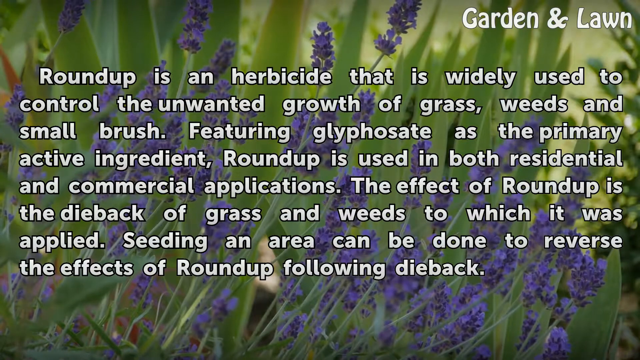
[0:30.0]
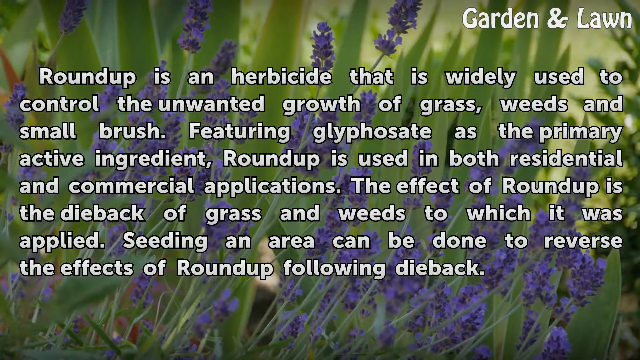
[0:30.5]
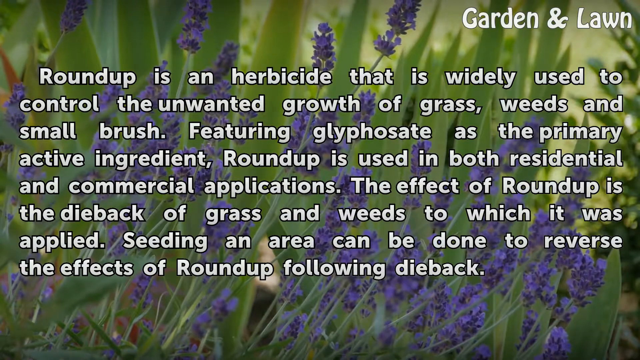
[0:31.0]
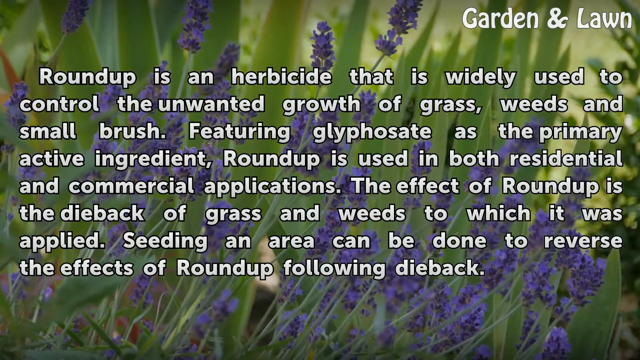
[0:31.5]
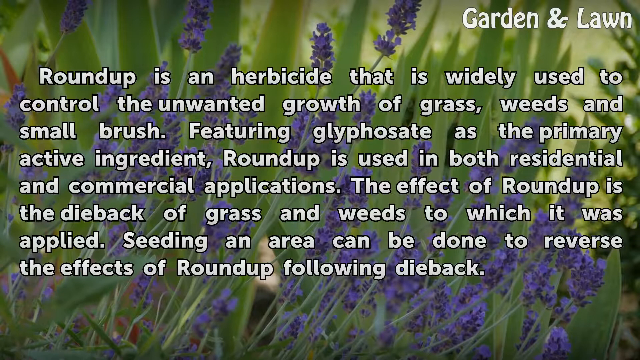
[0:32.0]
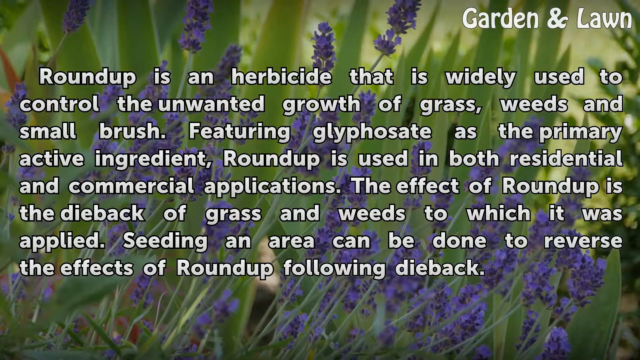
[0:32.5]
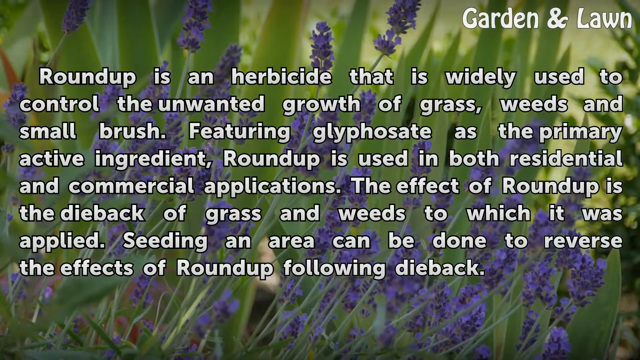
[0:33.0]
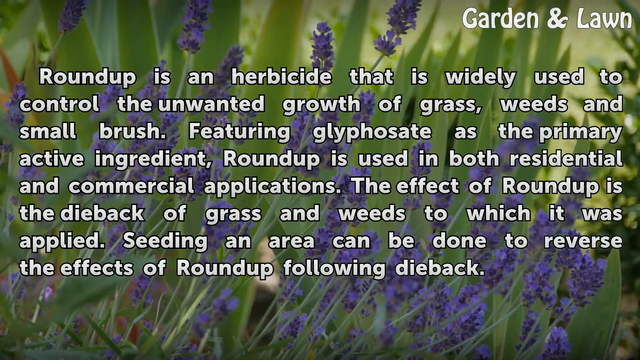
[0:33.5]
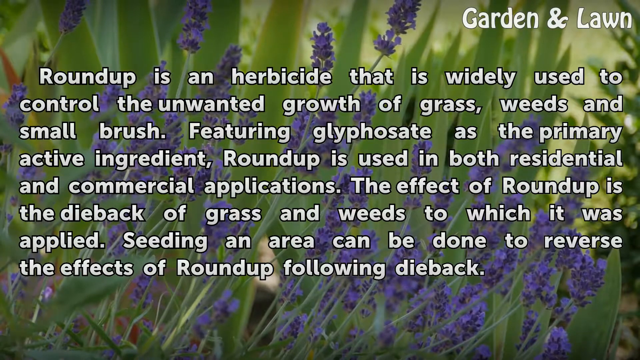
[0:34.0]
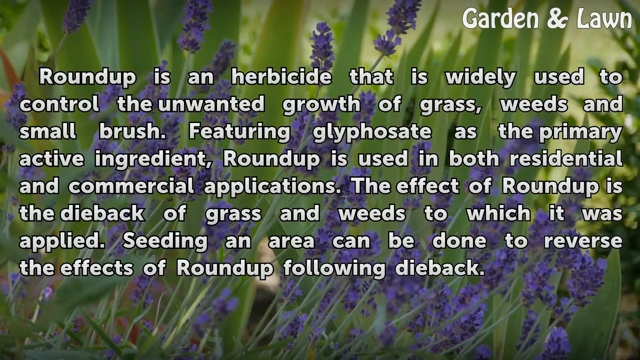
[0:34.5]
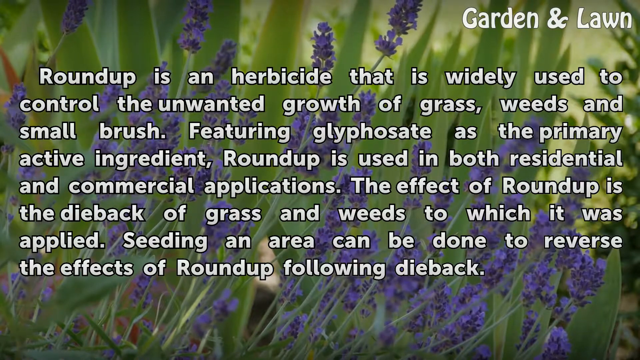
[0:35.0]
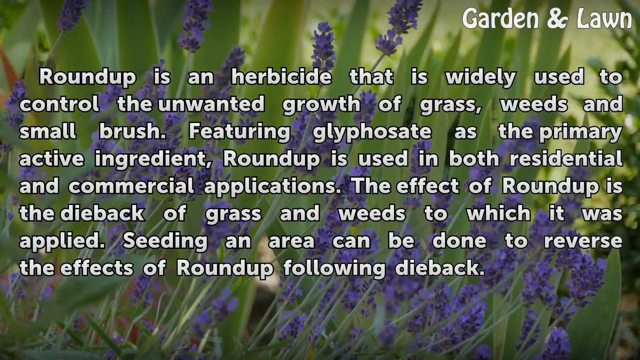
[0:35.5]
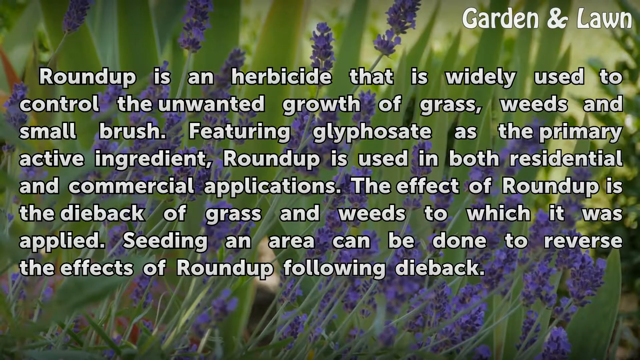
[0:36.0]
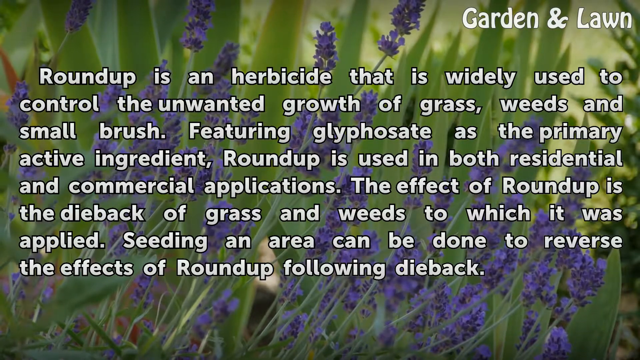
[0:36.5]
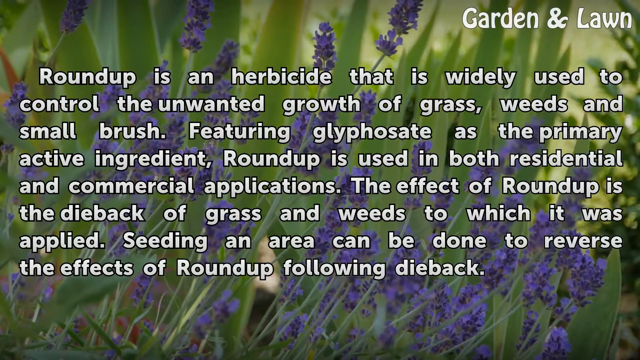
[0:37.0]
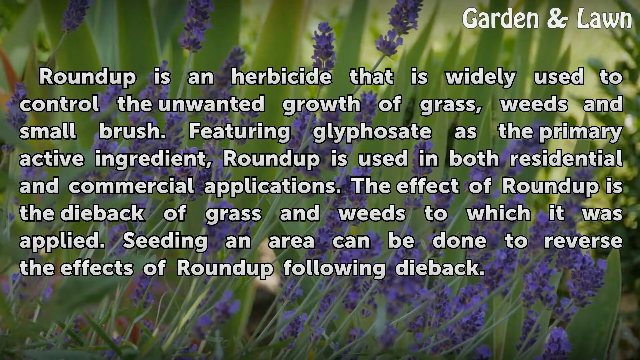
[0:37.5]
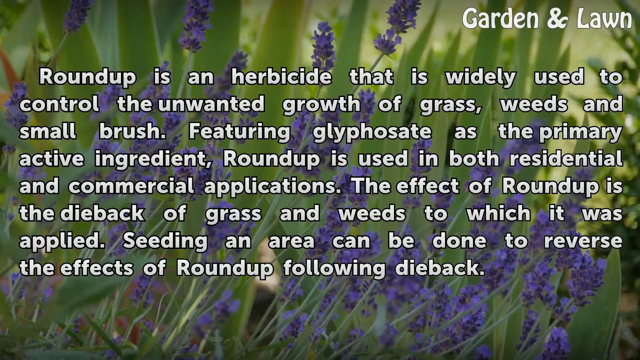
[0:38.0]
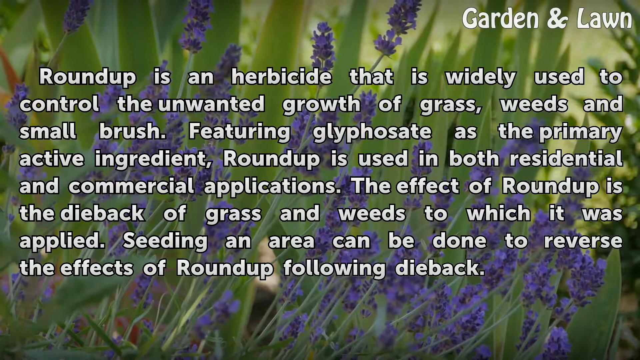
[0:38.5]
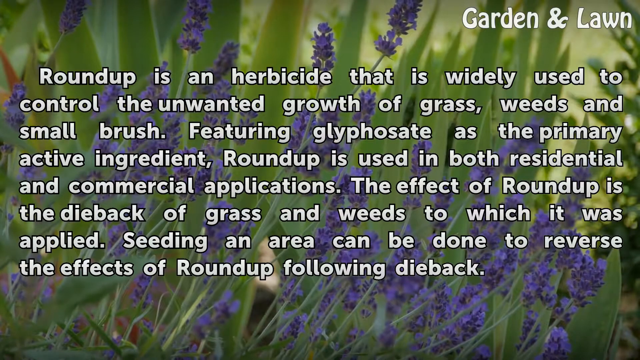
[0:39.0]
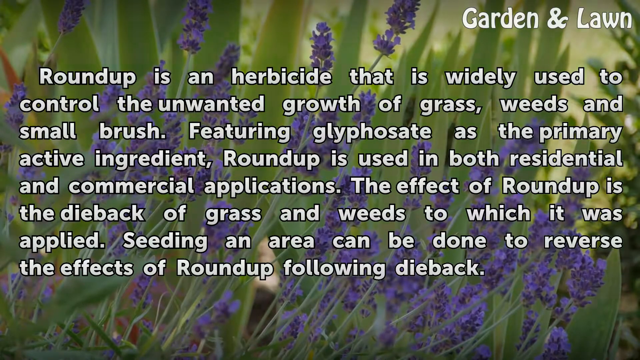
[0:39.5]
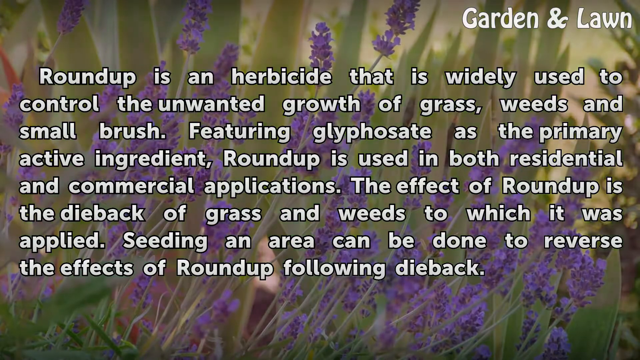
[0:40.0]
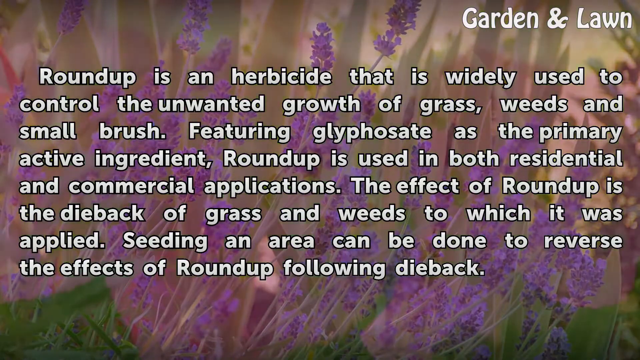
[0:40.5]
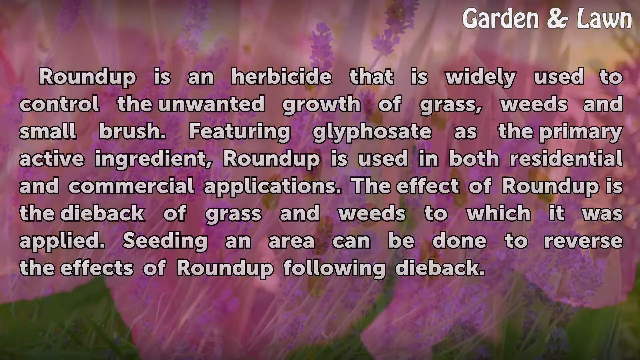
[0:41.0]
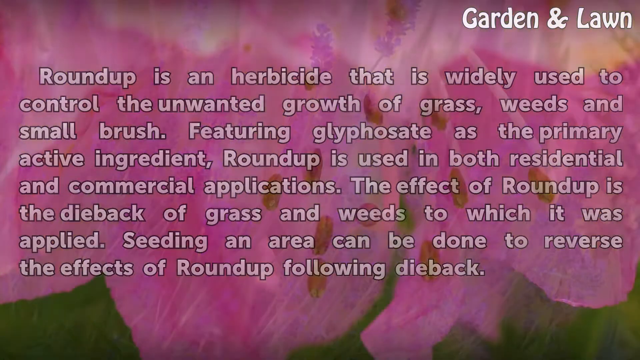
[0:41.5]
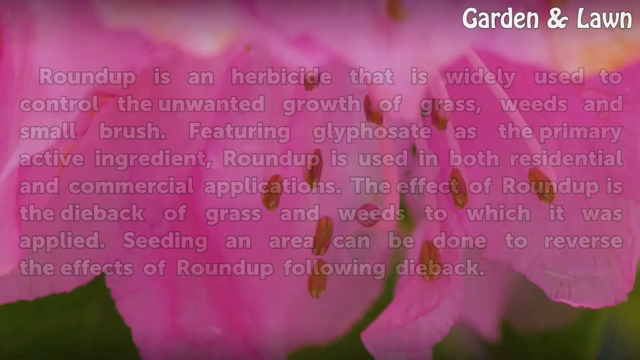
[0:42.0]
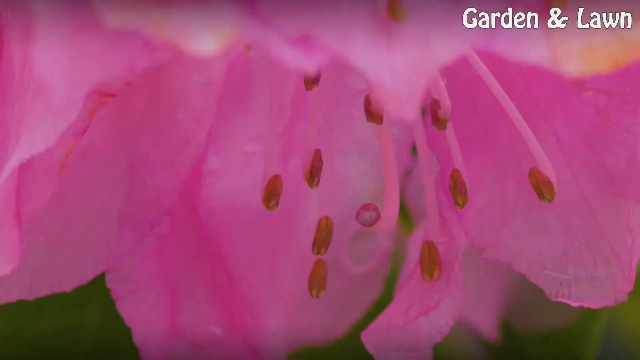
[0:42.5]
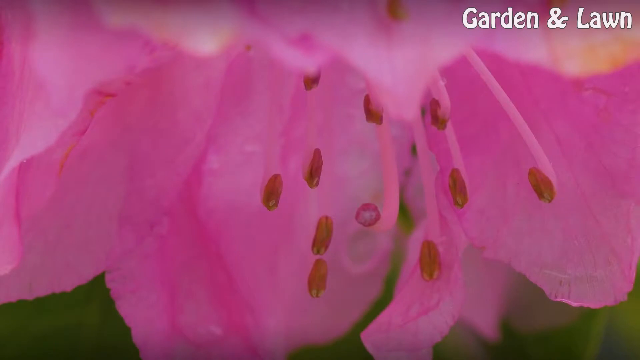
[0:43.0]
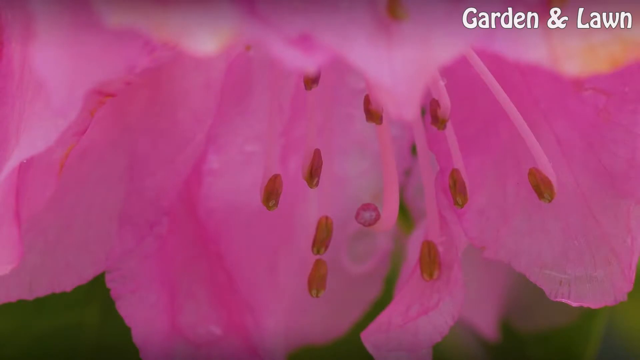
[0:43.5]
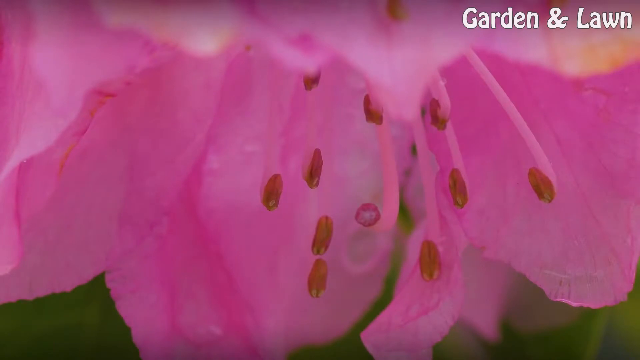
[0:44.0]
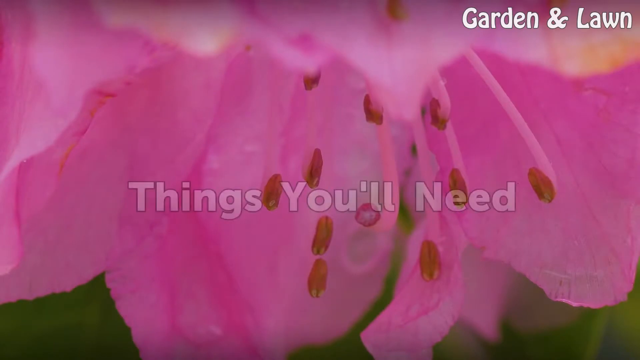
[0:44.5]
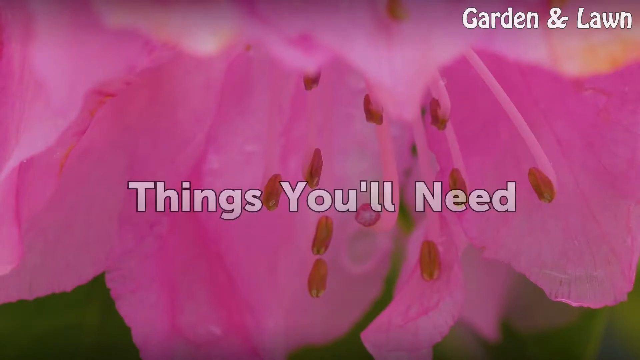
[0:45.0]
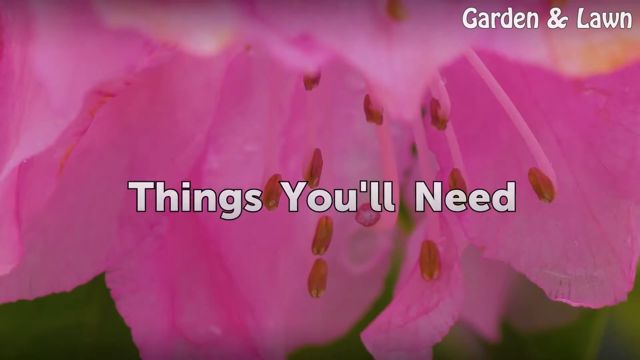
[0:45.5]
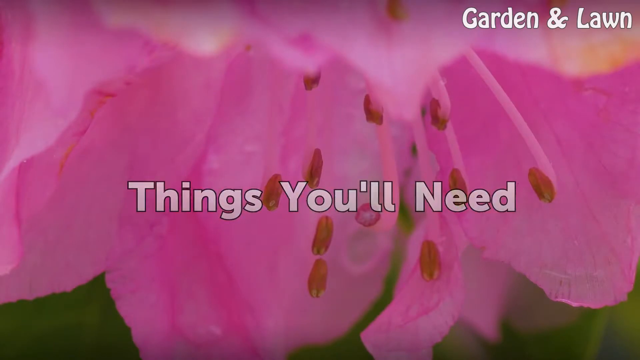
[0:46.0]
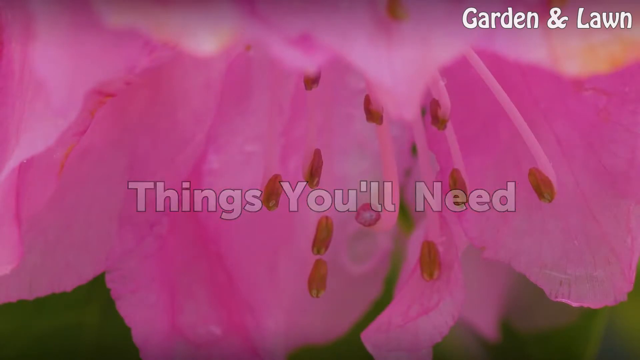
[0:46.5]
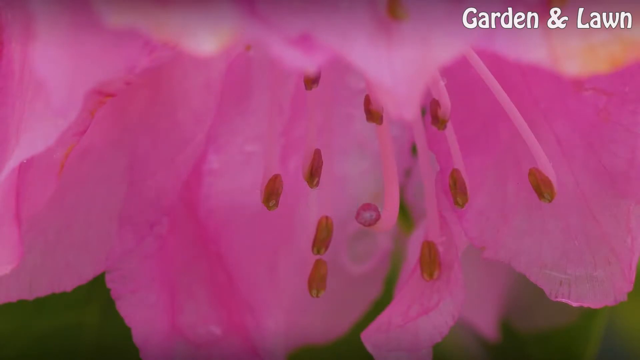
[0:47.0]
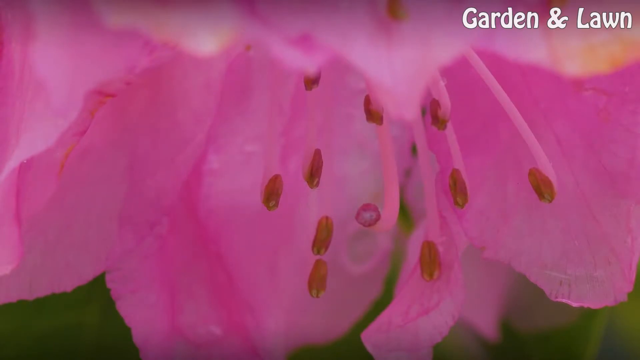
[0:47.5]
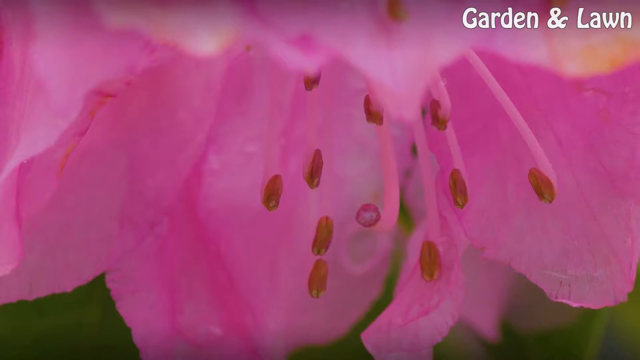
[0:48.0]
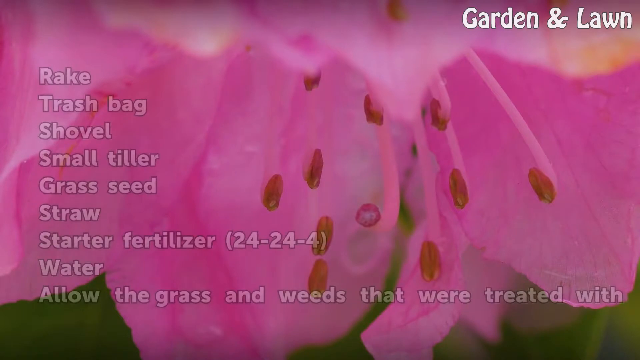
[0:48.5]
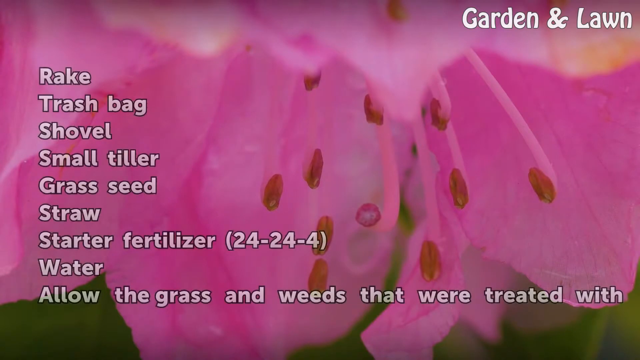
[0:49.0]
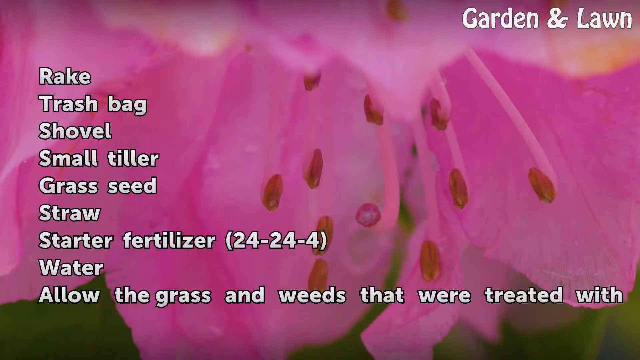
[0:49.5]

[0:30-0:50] Three hands in different shades of blue, navy blue, sky blue and light blue, appear with a message reading "Seven million deaf people, 300" and "sign language, unlimited potential" along with website addresses including BDA, UK and Deaf Australia. An orange flower follows against a green background with the message "how to reverse effect of Roundup weed killer". Text then appears: "Roundup is a herbicide that is widely used to control the unwanted growth of the grass, weed, and small brush", followed by text about the effect of Roundup and that seeding an area can repair it. A pink flower appears with "things you need", including a trash bag and a shovel. A purple flower with green behind the message also appears, and the pink flower shows the list of things you need, including shovels, grass seeds and straw.